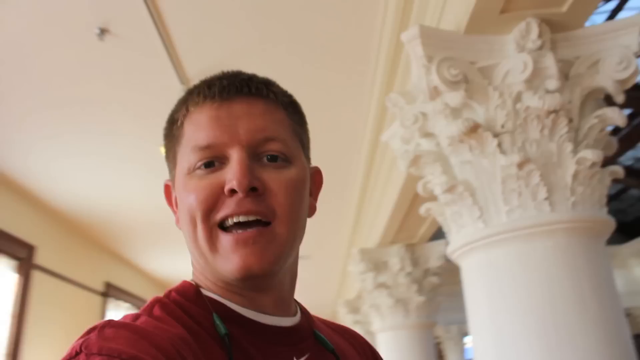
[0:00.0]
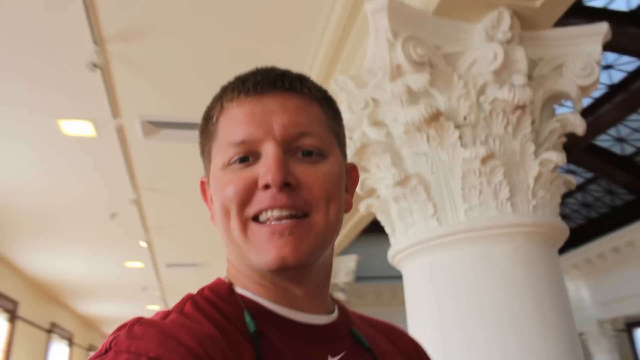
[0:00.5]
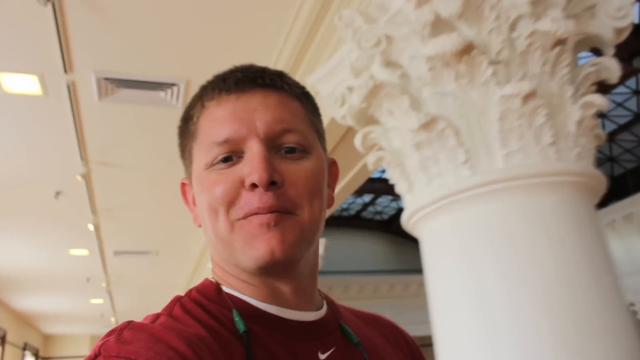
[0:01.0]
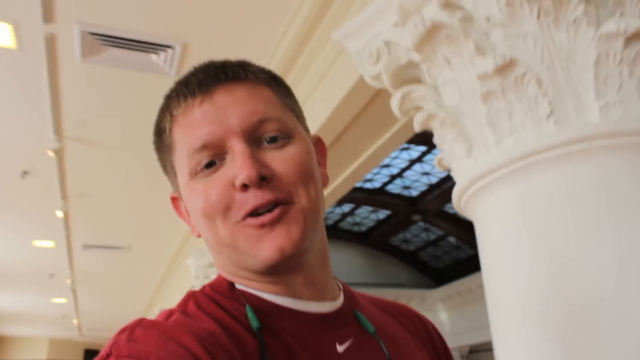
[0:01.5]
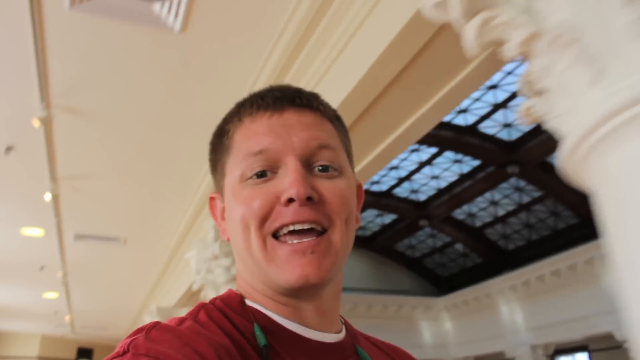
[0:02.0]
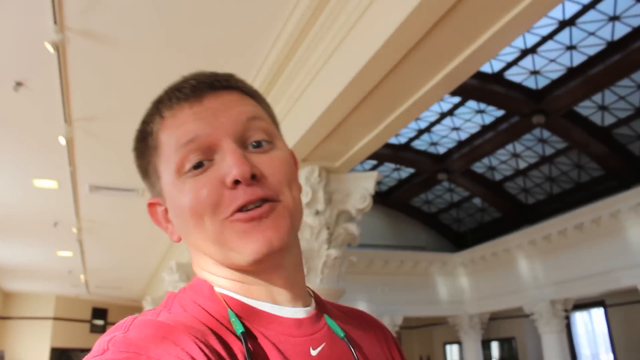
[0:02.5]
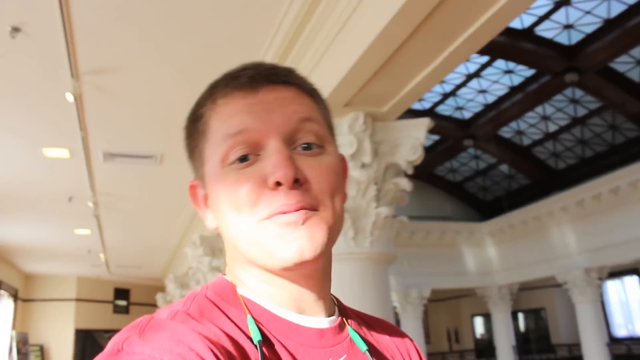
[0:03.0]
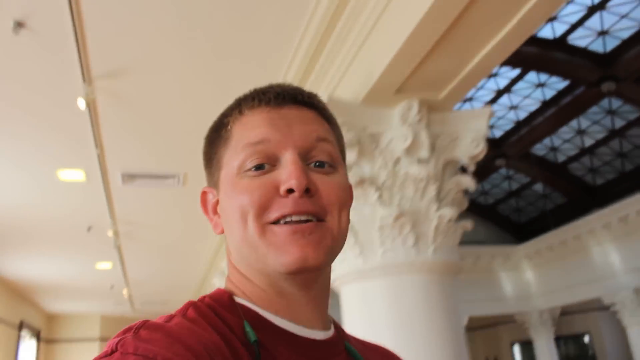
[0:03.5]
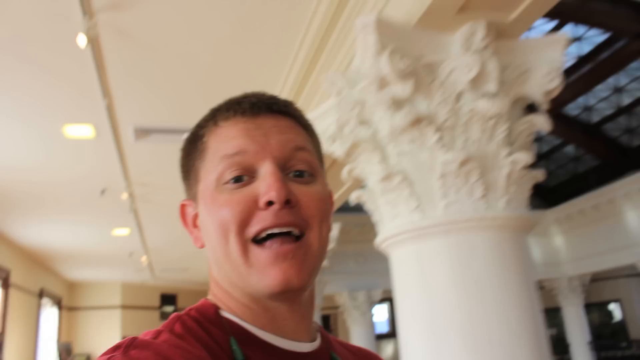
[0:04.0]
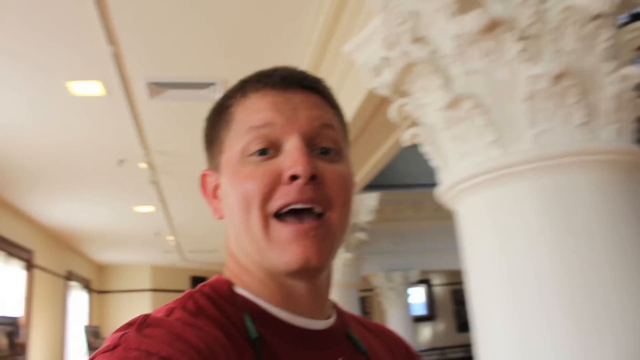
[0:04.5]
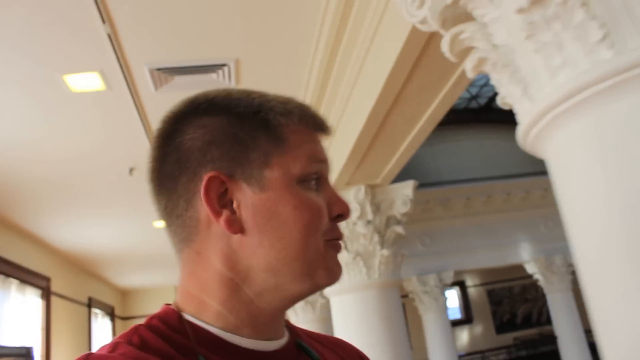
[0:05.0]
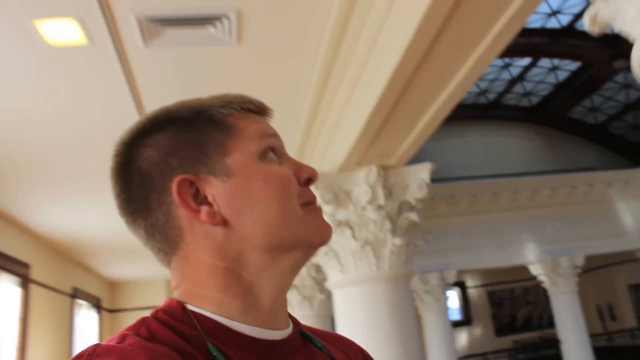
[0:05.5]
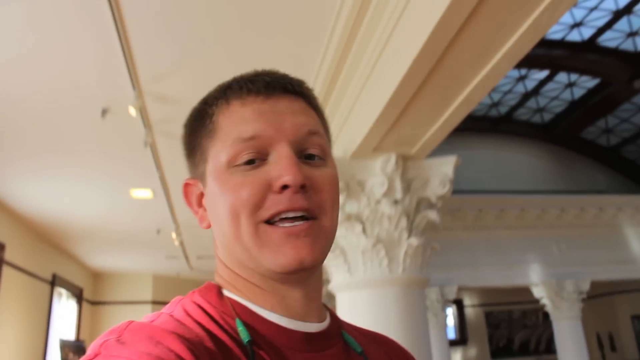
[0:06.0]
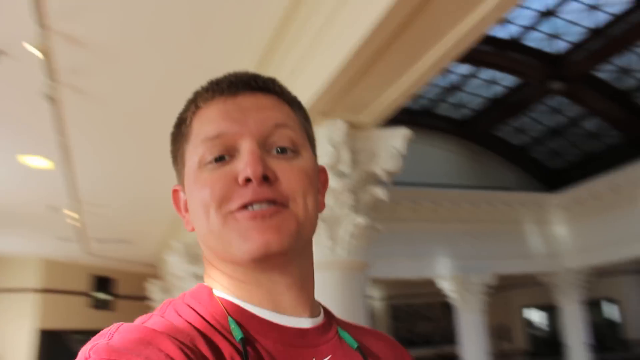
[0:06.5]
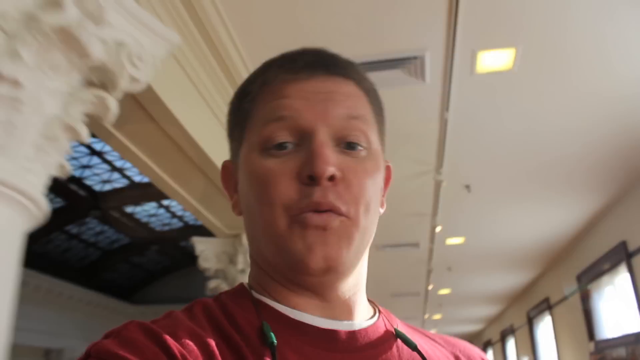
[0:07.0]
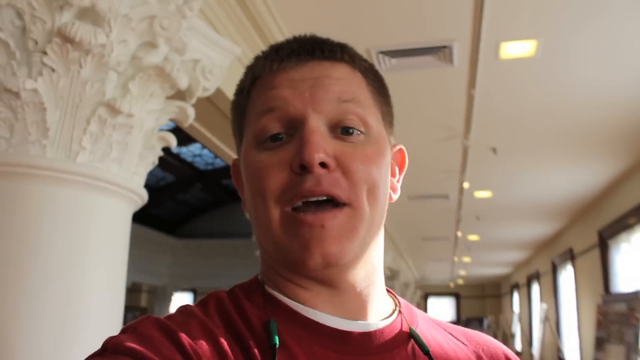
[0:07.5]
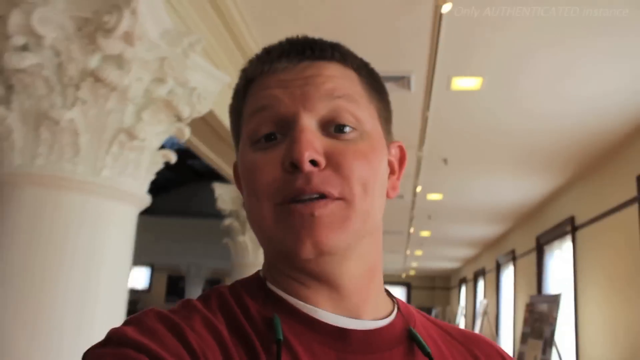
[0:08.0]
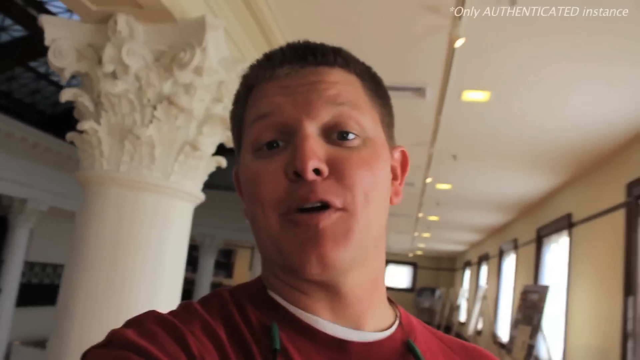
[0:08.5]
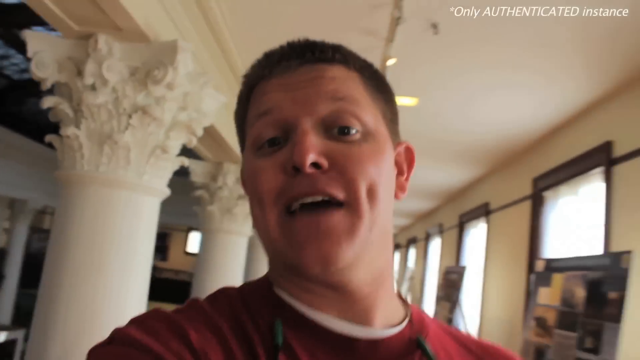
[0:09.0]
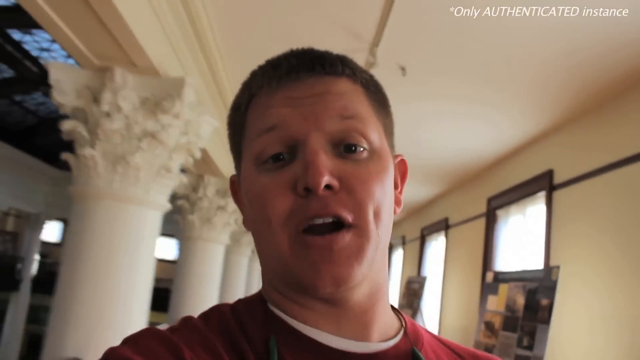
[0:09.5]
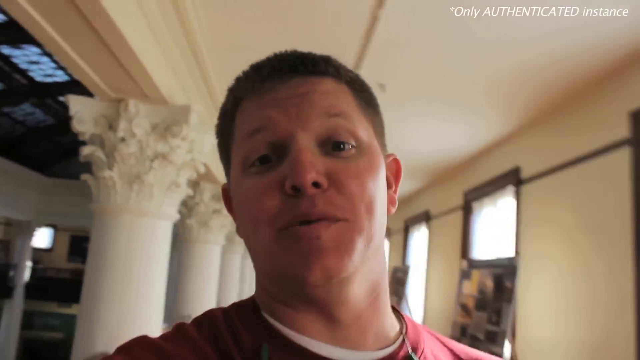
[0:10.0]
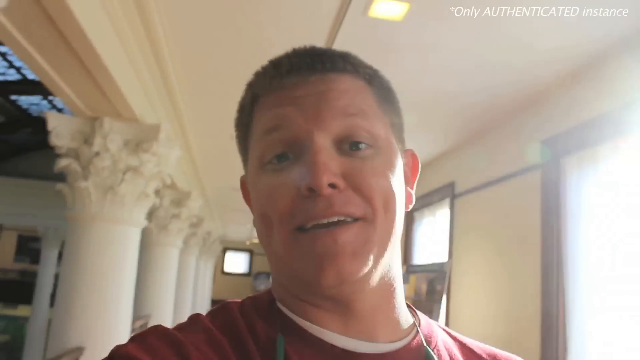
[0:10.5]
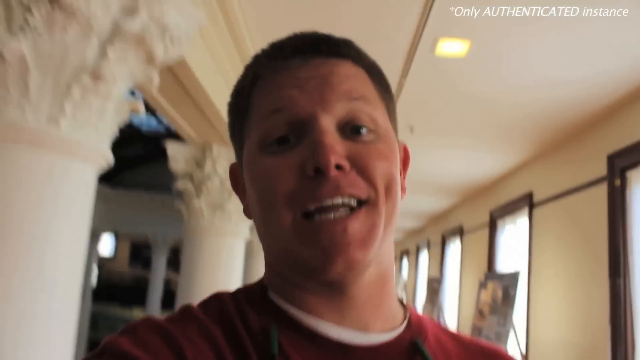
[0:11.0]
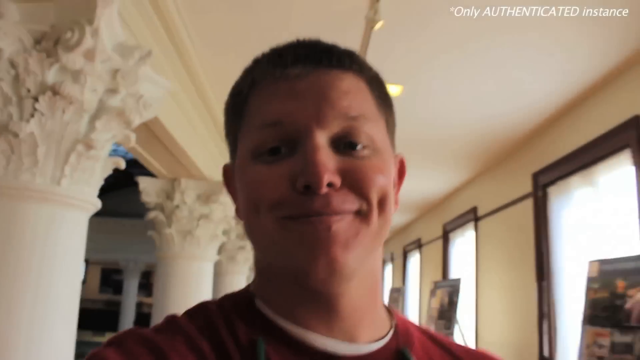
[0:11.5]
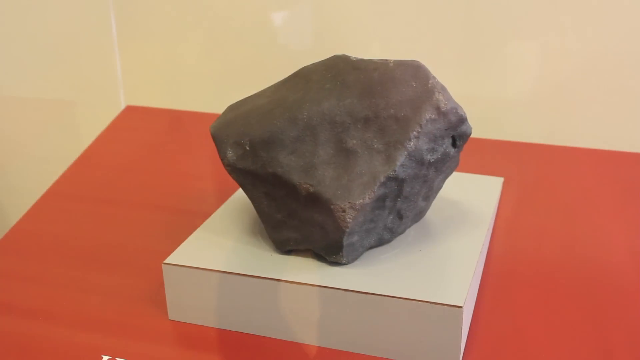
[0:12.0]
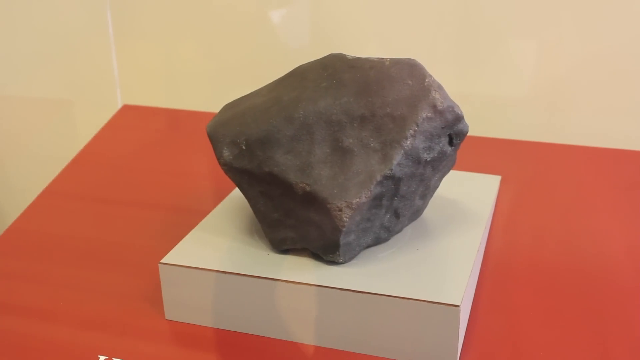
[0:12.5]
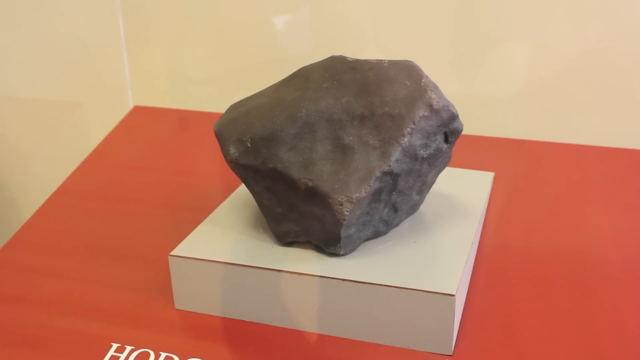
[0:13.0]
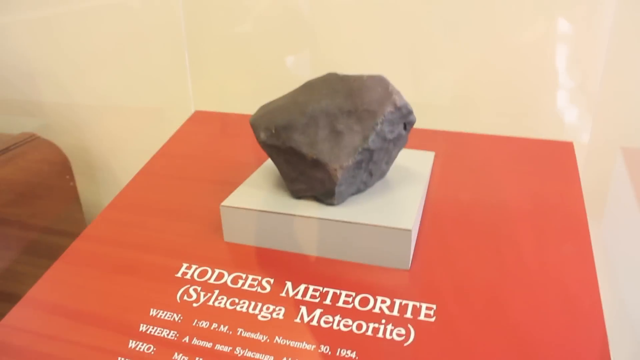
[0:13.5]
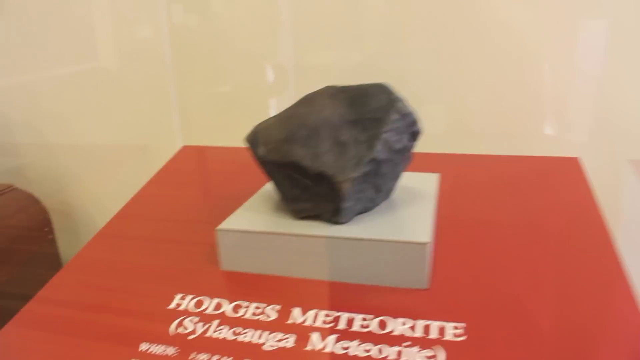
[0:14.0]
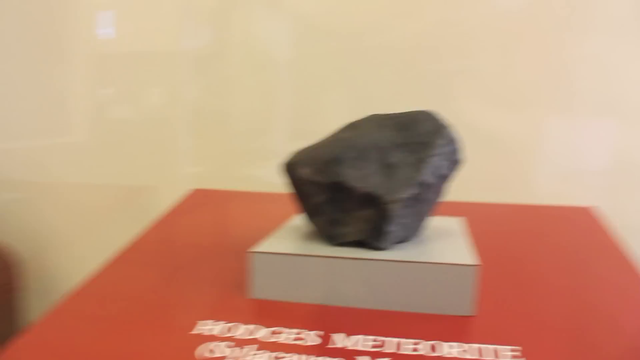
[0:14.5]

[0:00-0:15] What looks like something in the sky appears, and then a man walks backwards while talking. He is in a building with pillars and a sort of low ceiling. A picture of a black rock is shown, then the man talking again, with some windows visible at the top on the right side. The black rock appears again, then the man talking beneath the sort of low white ceiling, with the pillars and the windows on the right-hand side. The rock is then shown sitting on what looks like an orange stand with a tan one on top of it. The man talks again; he has short hair and appears to be wearing a red t-shirt, maybe with a white t-shirt underneath it.